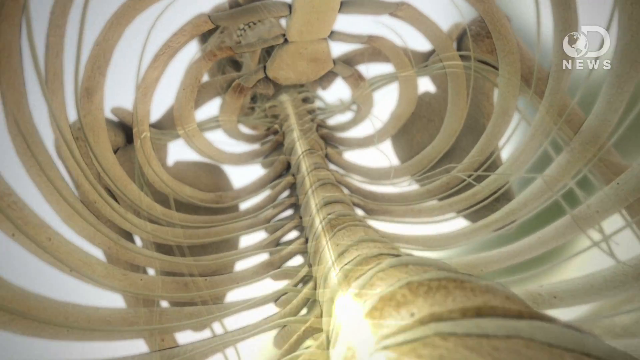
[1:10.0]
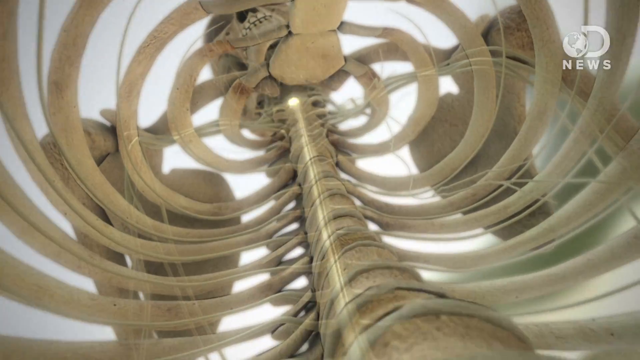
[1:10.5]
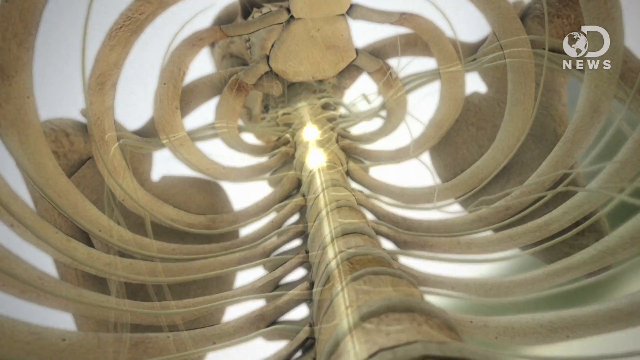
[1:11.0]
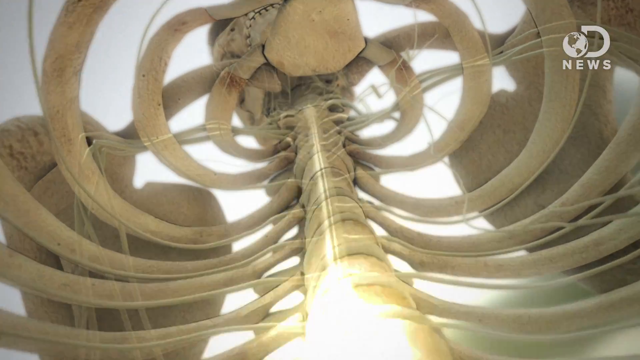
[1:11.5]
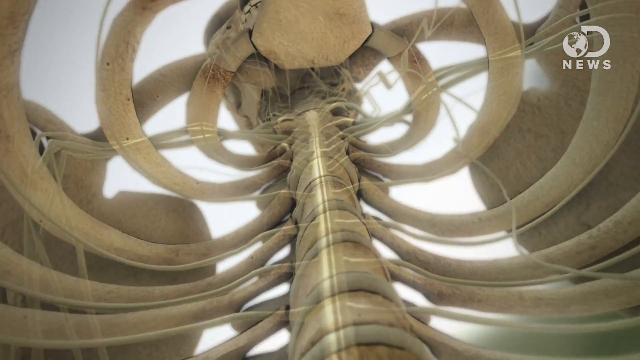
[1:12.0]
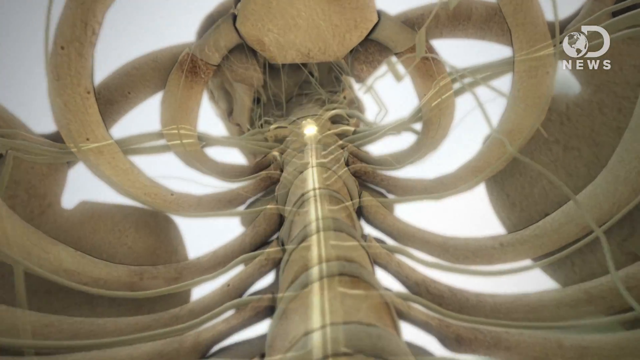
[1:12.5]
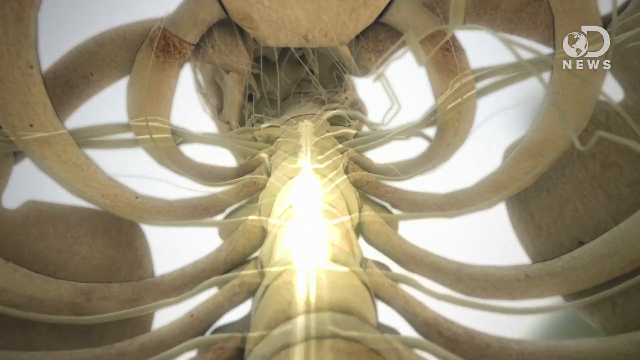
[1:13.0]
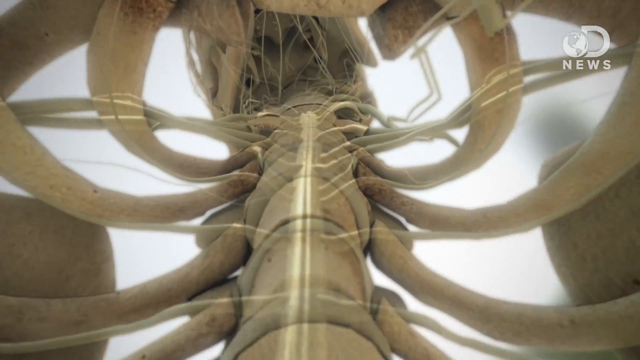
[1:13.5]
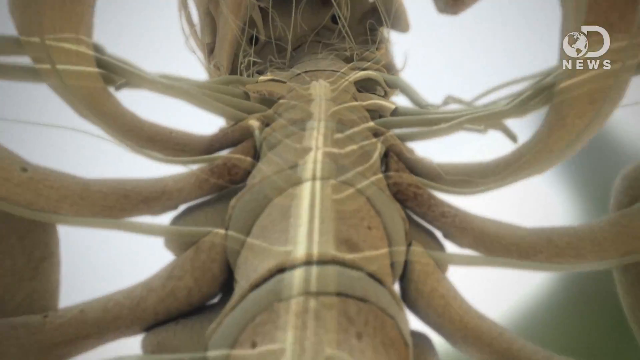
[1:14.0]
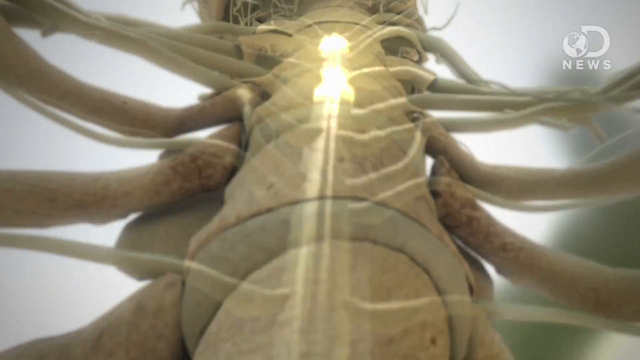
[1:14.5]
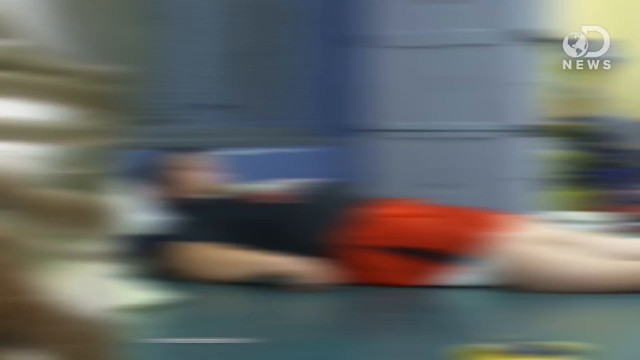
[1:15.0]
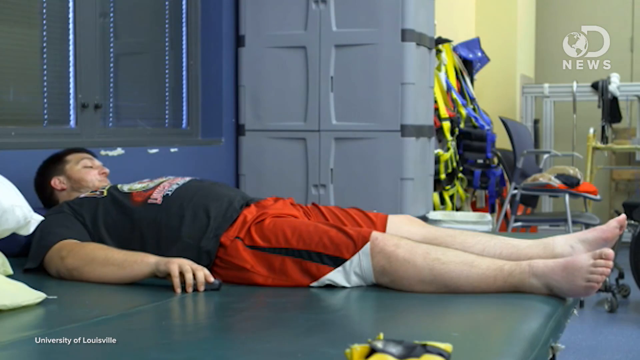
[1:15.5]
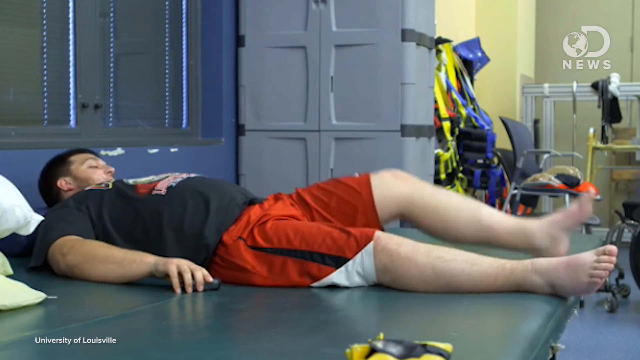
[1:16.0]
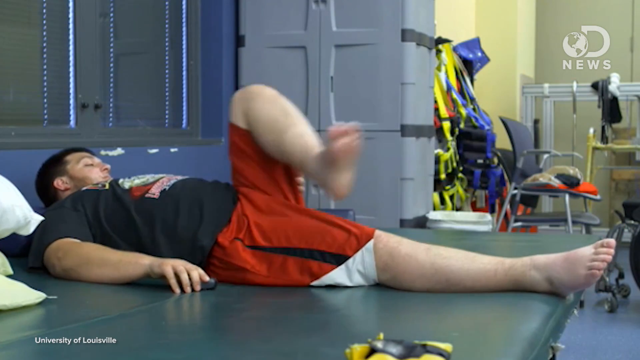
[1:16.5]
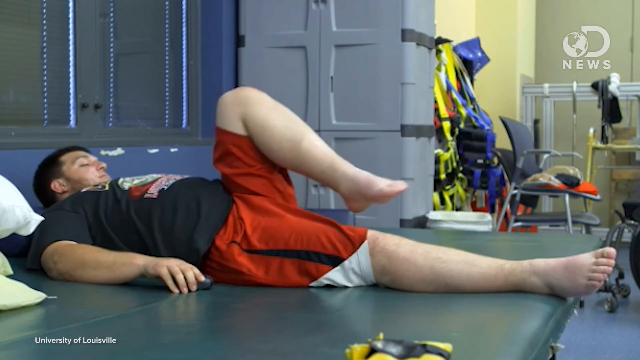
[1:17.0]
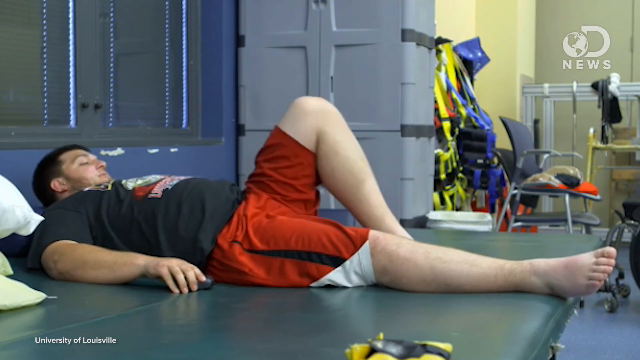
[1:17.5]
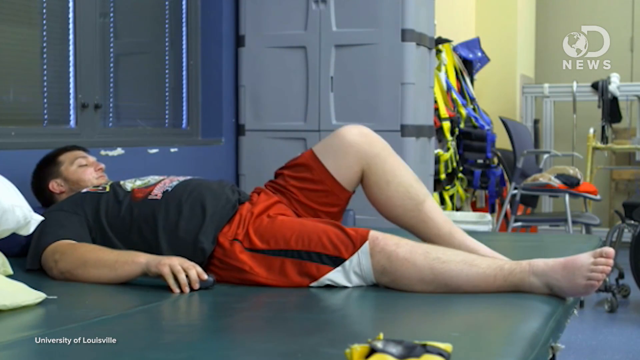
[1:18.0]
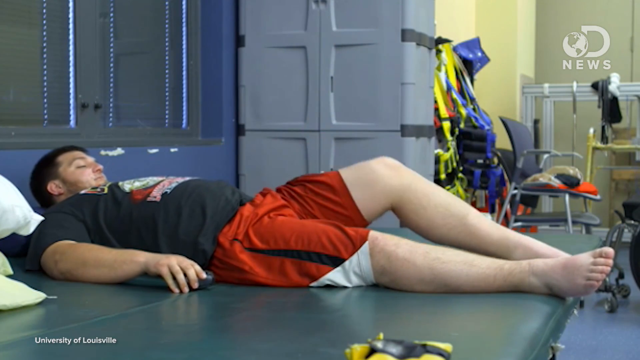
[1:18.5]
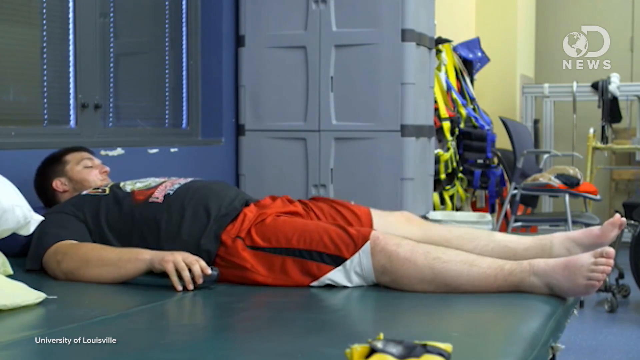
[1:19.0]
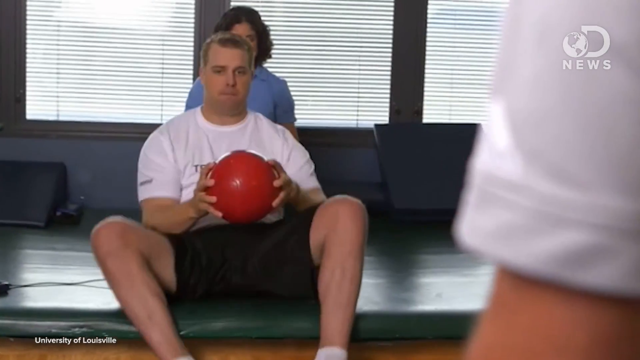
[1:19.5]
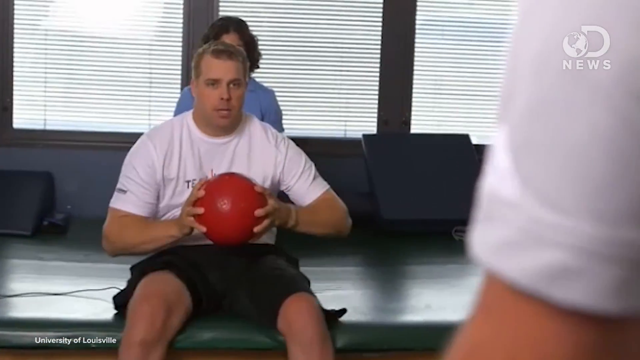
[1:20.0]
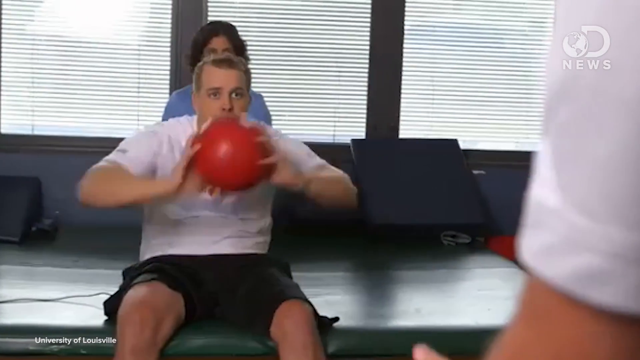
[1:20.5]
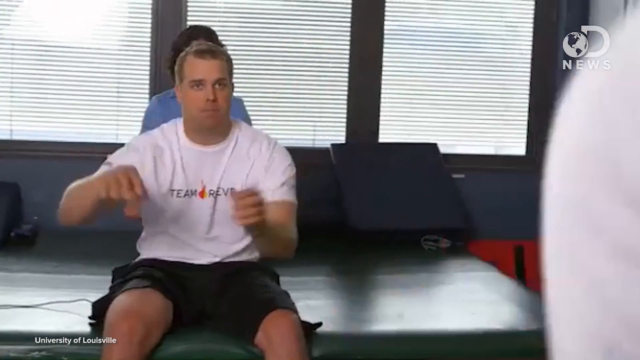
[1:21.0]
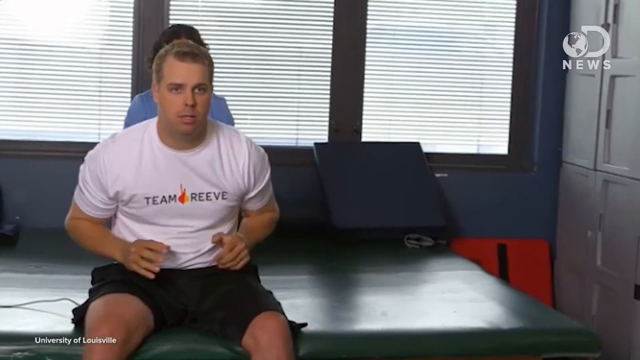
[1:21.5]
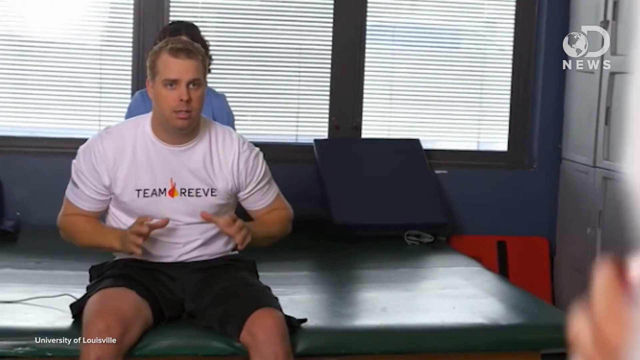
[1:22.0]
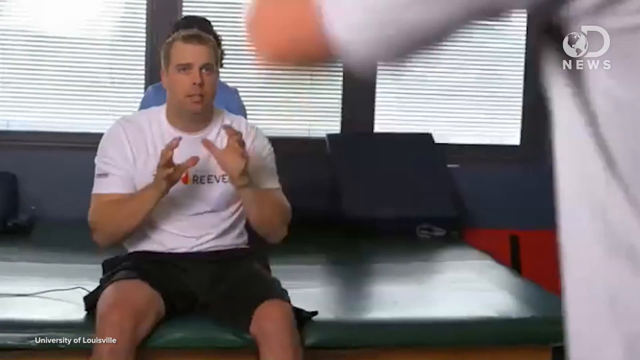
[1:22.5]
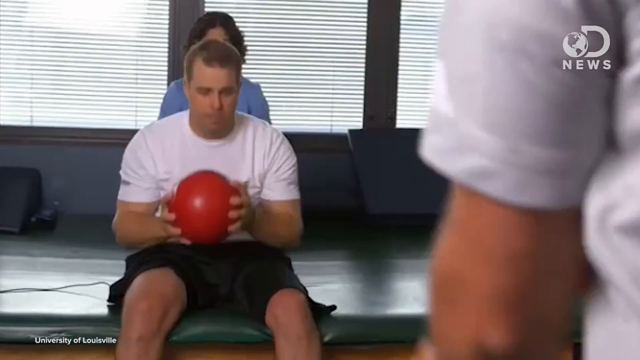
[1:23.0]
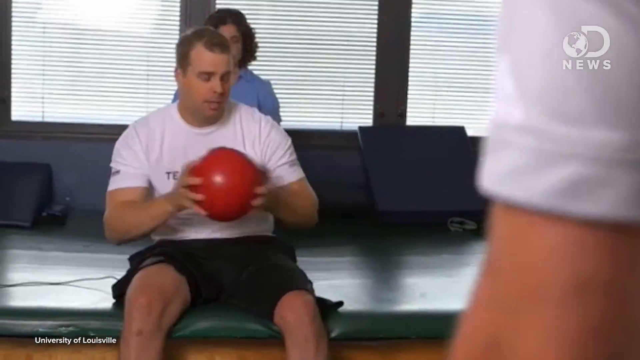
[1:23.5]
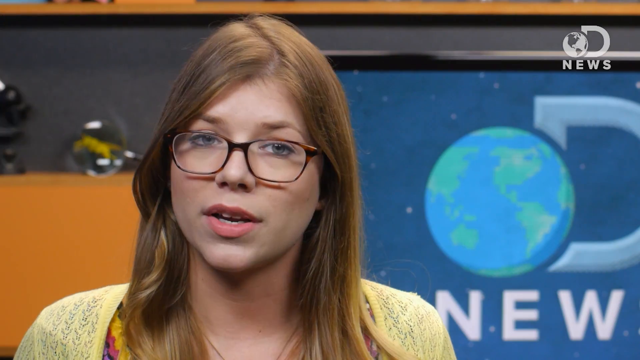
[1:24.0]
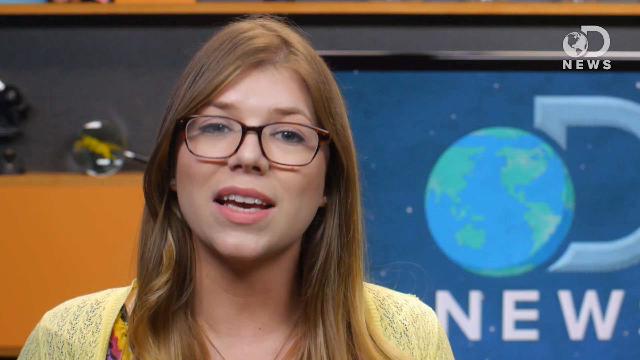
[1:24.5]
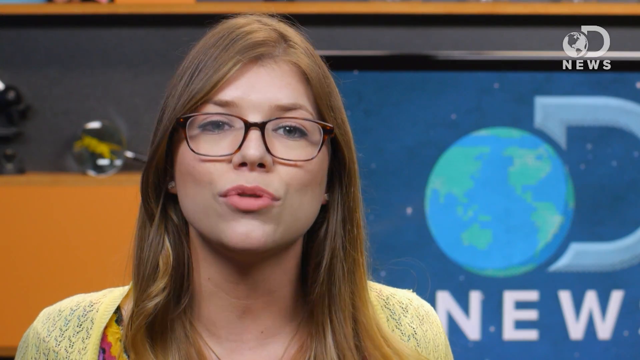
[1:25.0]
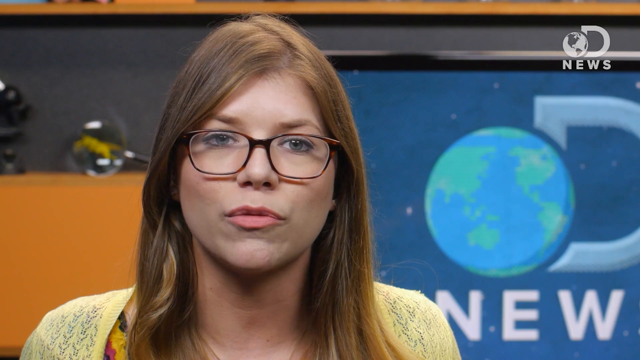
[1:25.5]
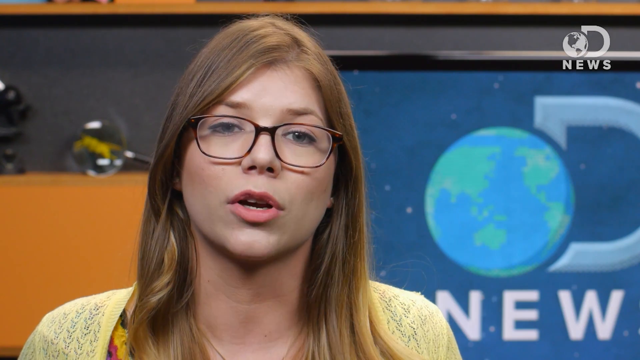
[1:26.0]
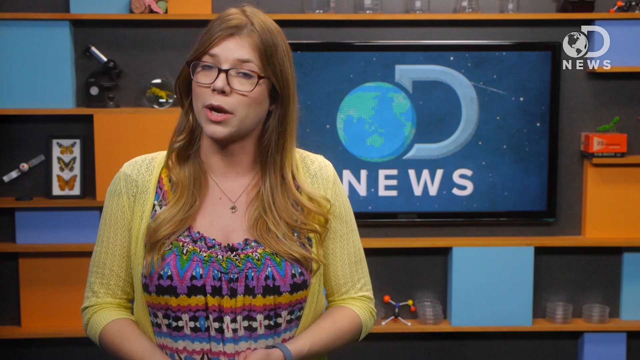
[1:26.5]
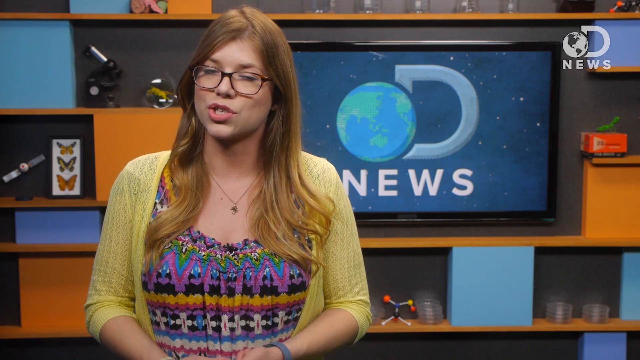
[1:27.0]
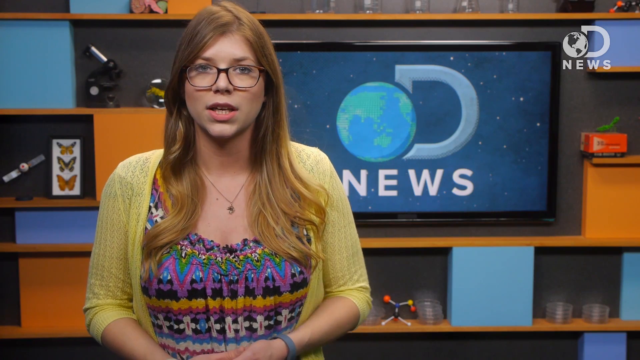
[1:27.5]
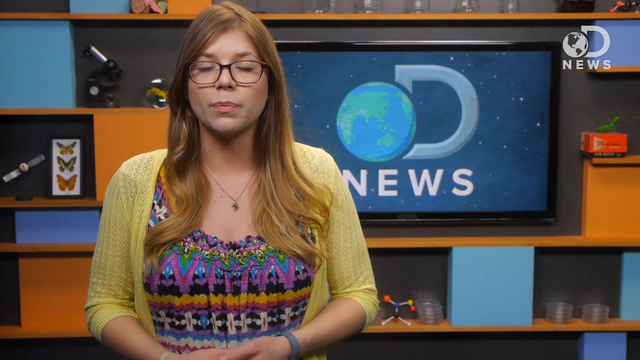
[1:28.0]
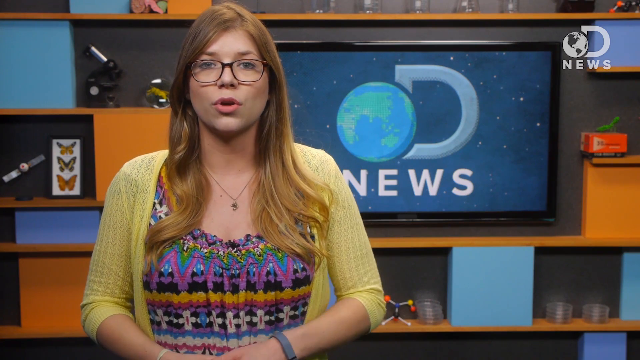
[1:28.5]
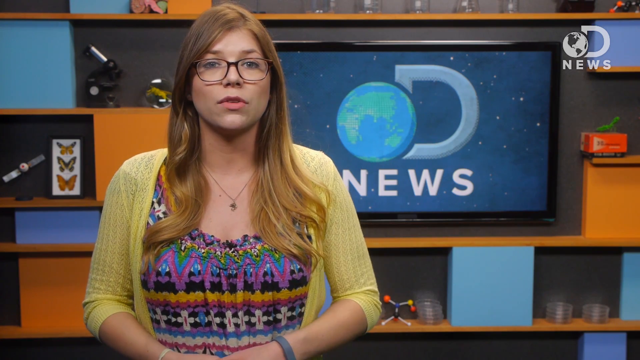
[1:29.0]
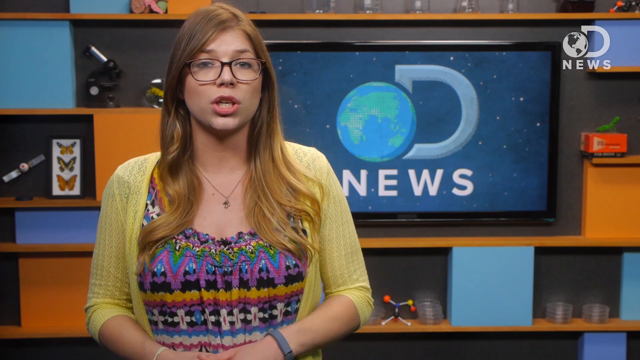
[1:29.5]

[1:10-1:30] A digitally rendered video shows a light flowing up a skeleton's spine. The camera follows the light up through the ribcage toward the skull as several lights pulse by along the trail. A slide cut from the left leads to a man lying on his back performing occupational therapy exercises. He lifts his left knee until it is at 90 degrees to his other knee, keeping his lower leg at roughly 90 degrees to the bent upper leg. He then crosses the lower leg, foot first, over his still-extended right leg, bounces the left foot in place for a second, then folds it back over to its proper side and straightens his foot out. The video cuts to another man performing exercises in a seated position; he throws a medicine ball forward to someone who catches it, while someone behind him braces him. The person across from him throws the medicine ball back, and he catches it in both hands, bringing it gently in toward his chest. The video cuts back to the reporter, who speaks into the camera, leaning her head forward to emphasize her words. A waist-up shot follows, in which she has her hands folded in front of her and bounces her elbows against her sides as she continues to speak.